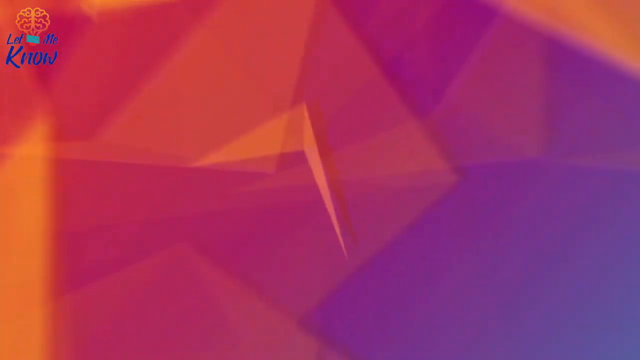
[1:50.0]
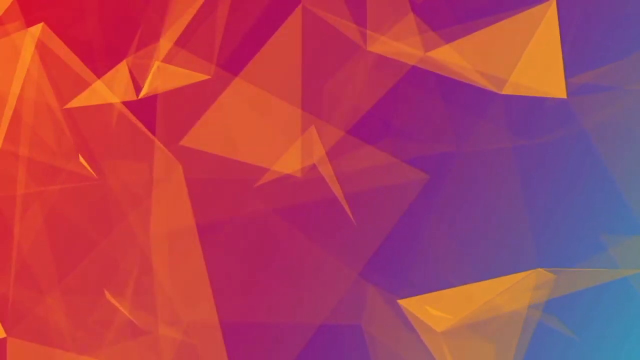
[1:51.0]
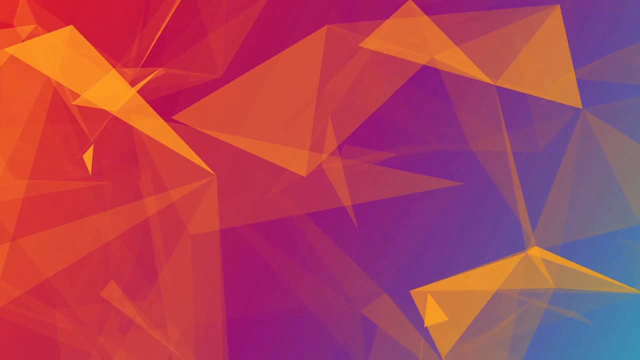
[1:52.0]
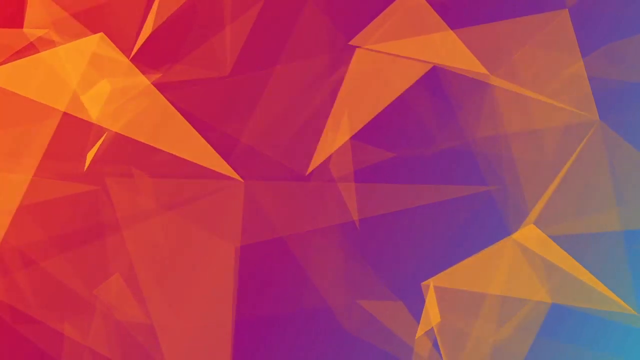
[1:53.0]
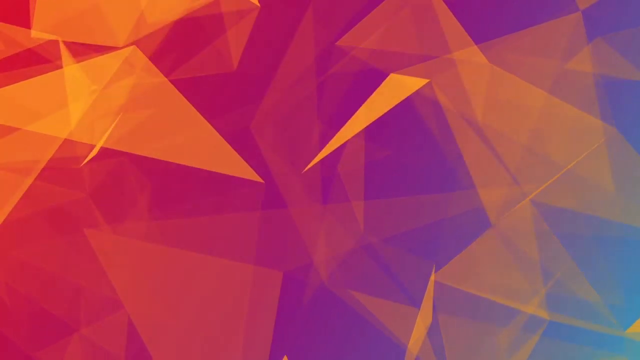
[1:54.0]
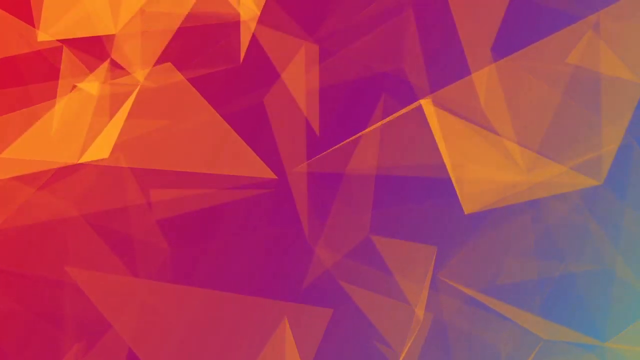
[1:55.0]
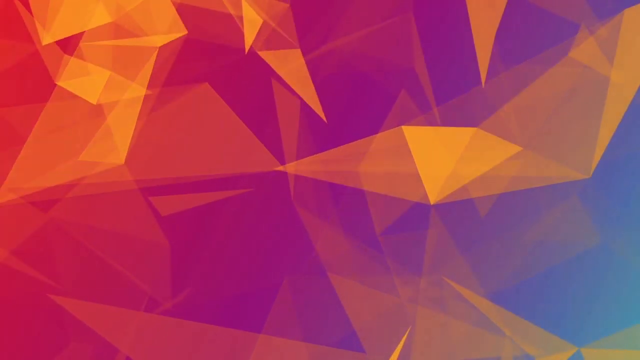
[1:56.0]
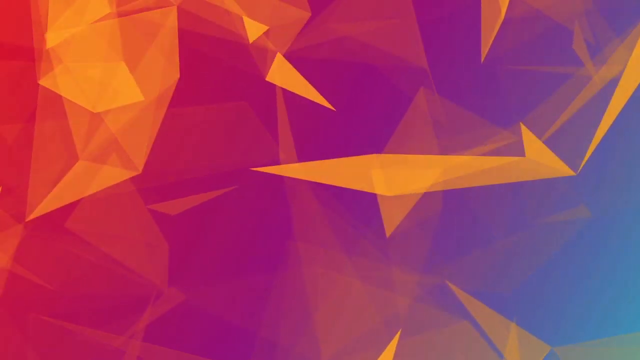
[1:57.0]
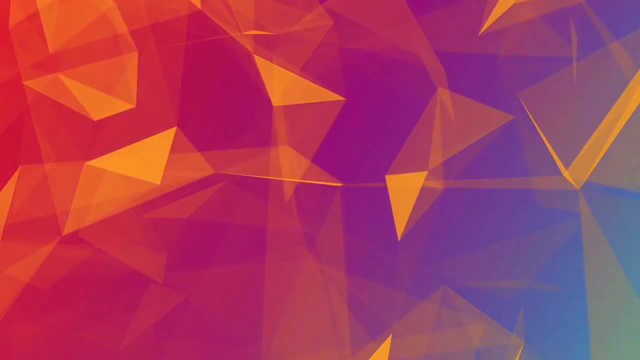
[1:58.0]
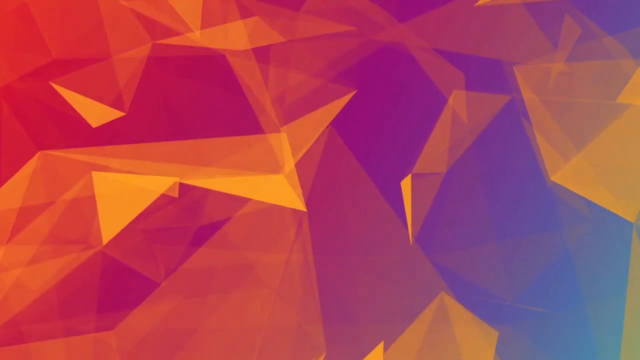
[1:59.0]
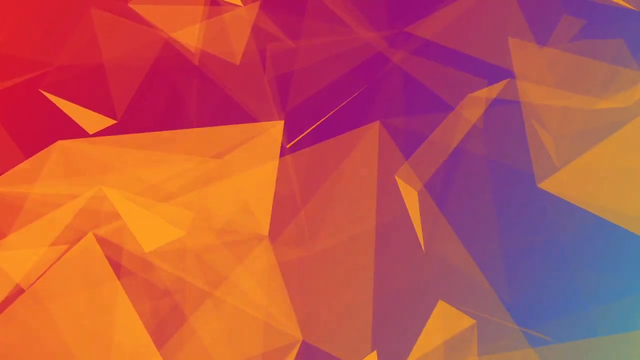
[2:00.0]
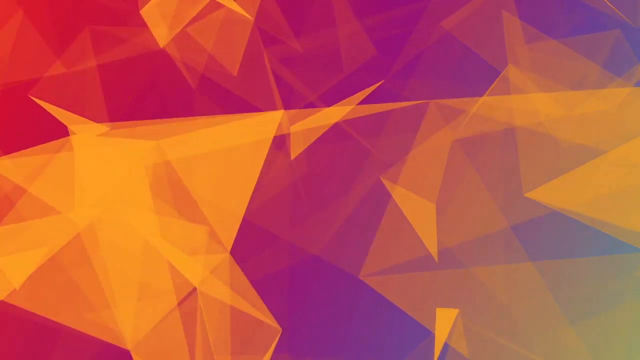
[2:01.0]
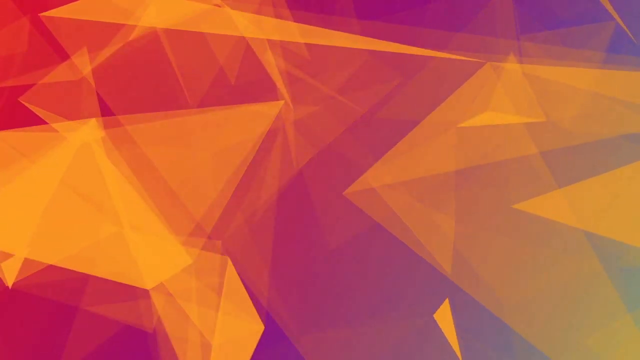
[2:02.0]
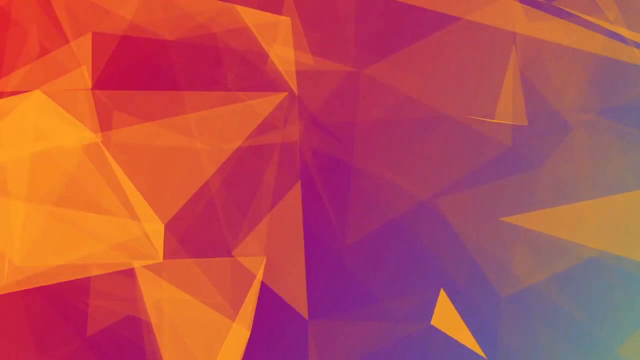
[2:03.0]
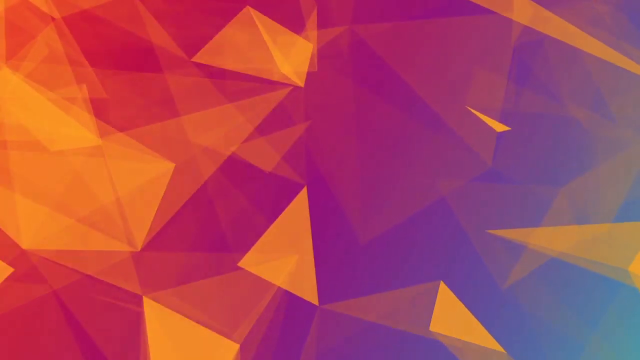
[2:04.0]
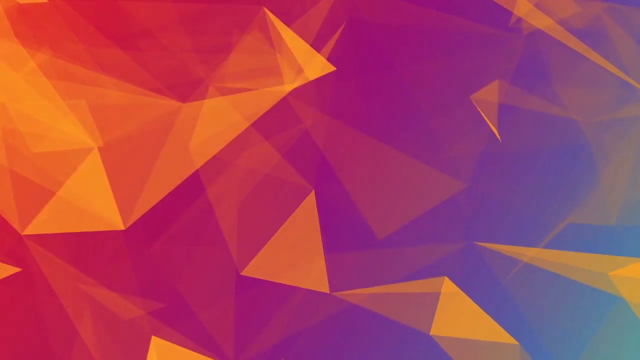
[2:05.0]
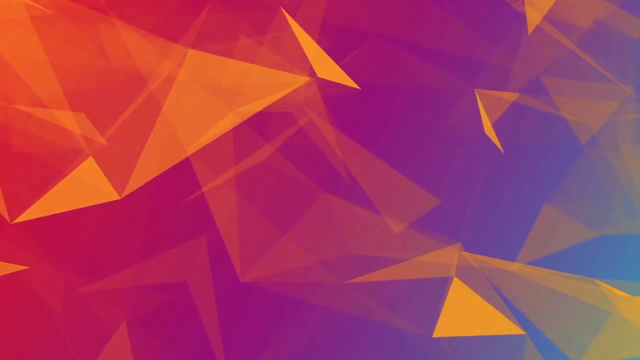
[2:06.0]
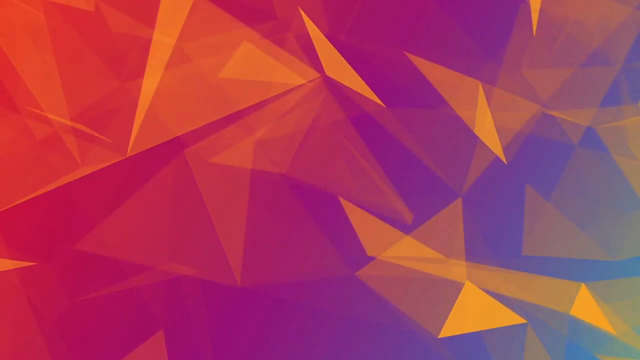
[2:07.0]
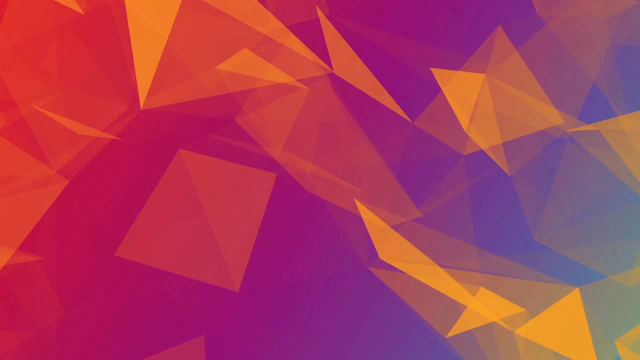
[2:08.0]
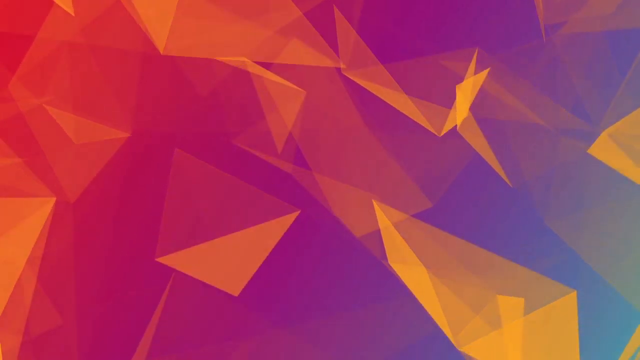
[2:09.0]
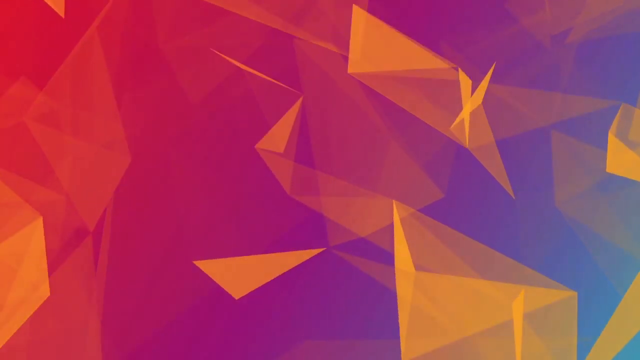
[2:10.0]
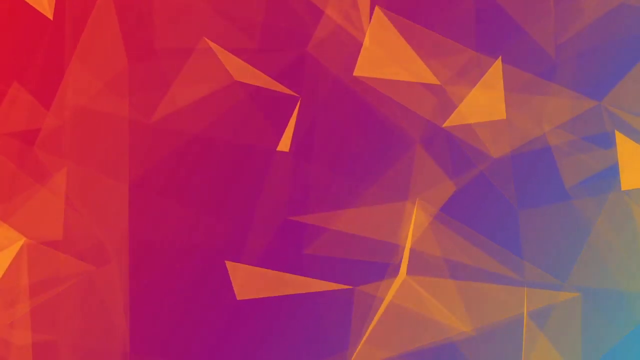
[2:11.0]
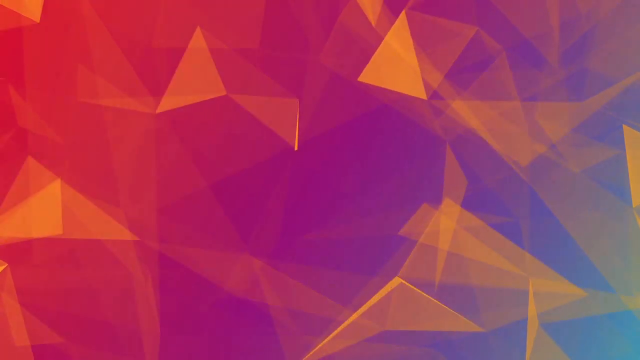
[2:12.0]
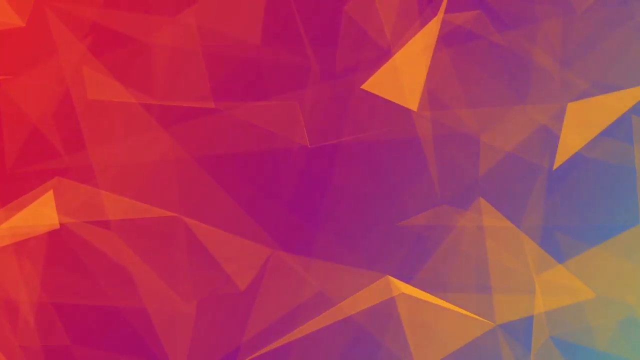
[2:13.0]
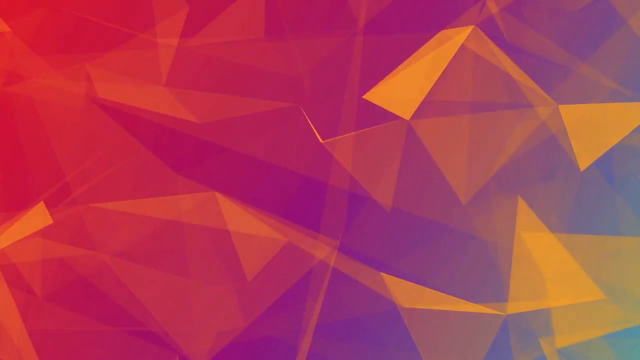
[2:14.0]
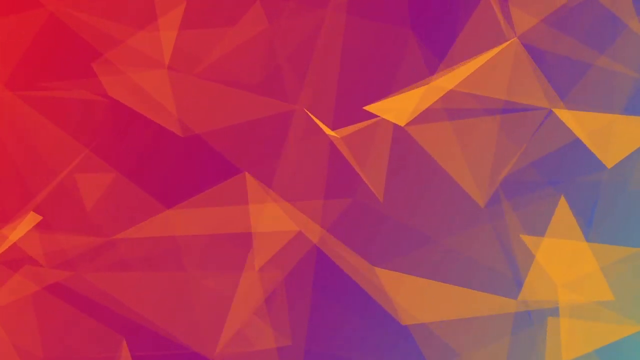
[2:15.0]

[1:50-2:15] A colourful abstract picture shows purplish-yellow triangles, orange triangles, reddish hues and very small bluish hues at the bottom right. The colours include red, orange, yellow, mauve, purple, blue and teal. The angular triangle shapes float around and switch positions, in a screensaver-like style.